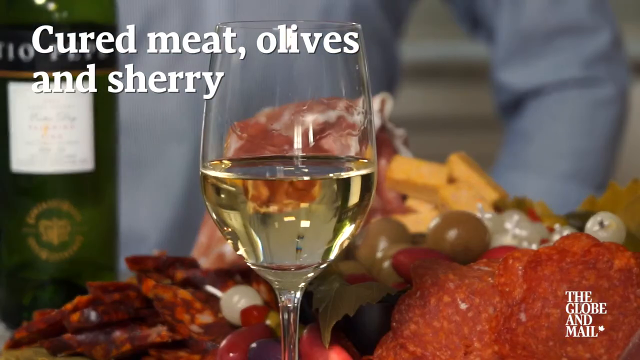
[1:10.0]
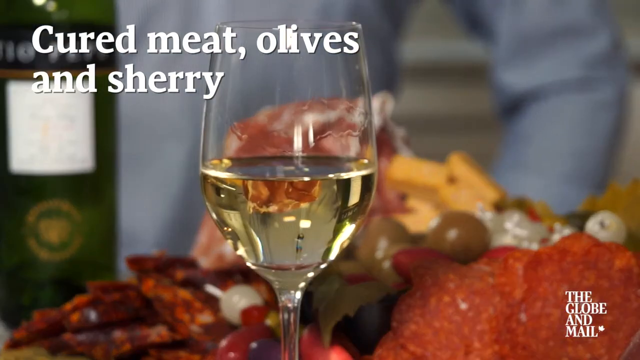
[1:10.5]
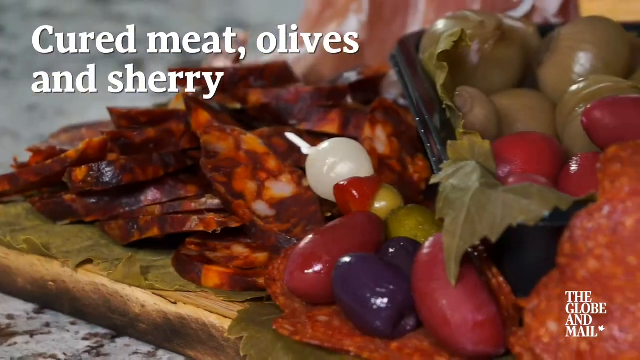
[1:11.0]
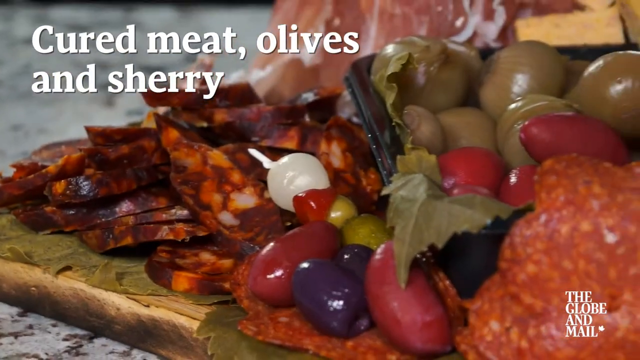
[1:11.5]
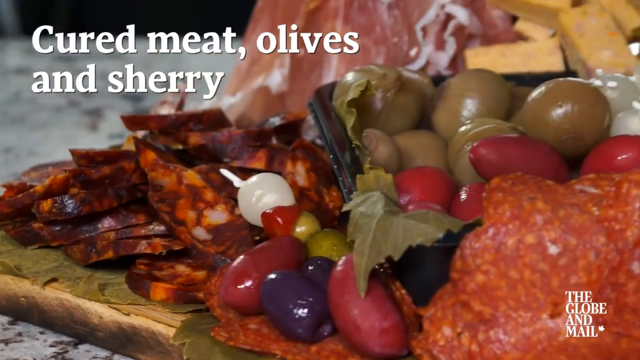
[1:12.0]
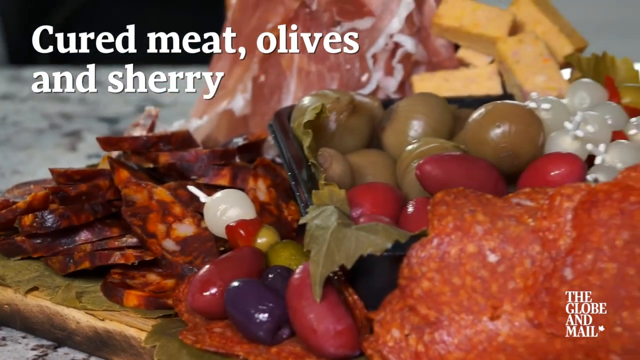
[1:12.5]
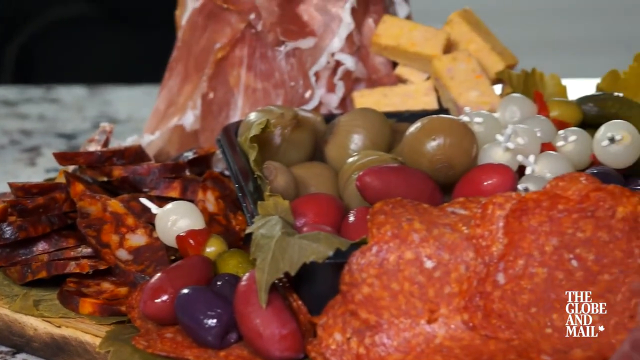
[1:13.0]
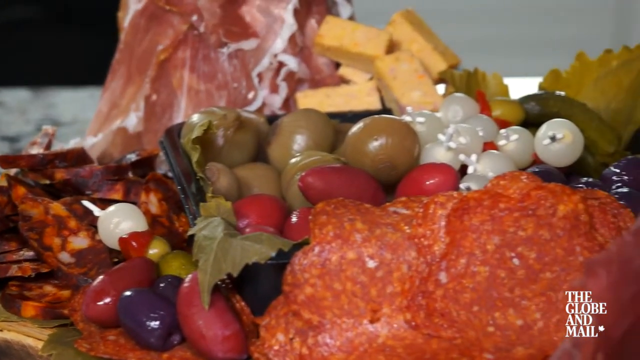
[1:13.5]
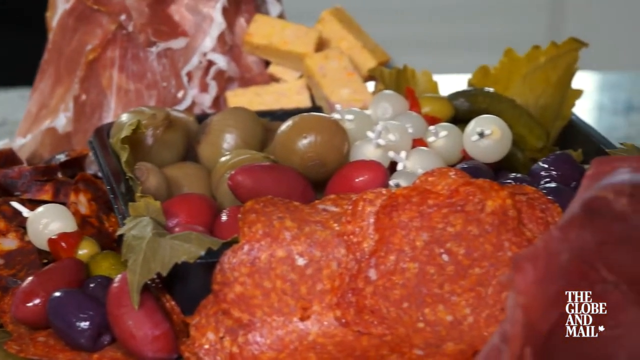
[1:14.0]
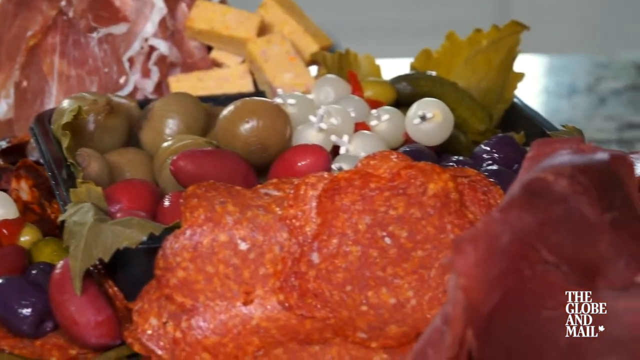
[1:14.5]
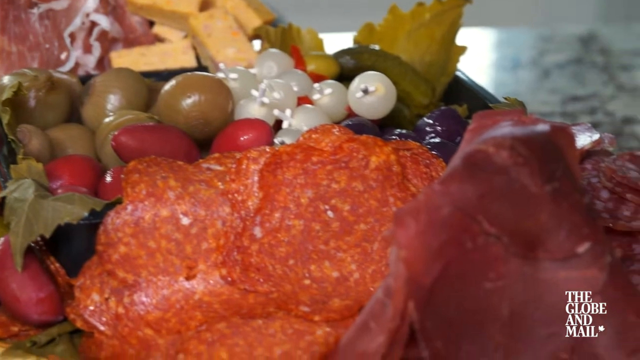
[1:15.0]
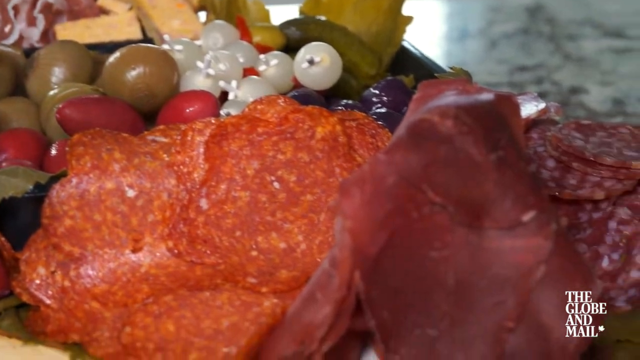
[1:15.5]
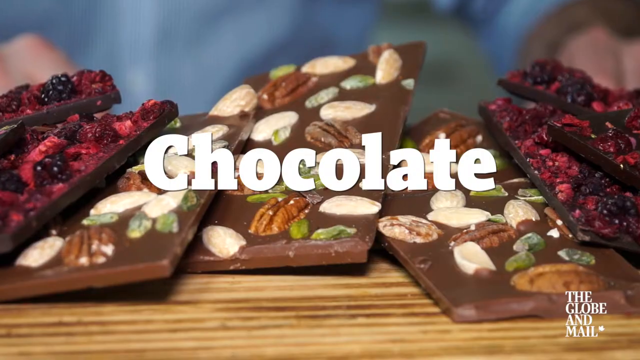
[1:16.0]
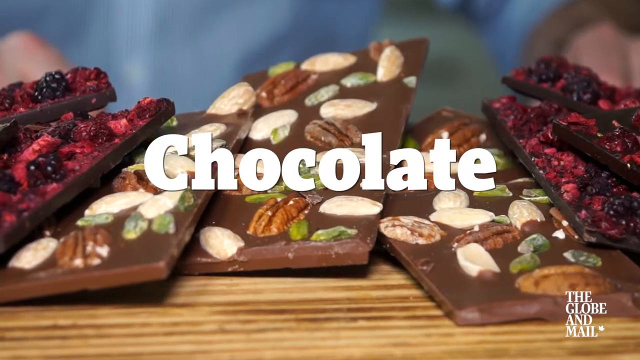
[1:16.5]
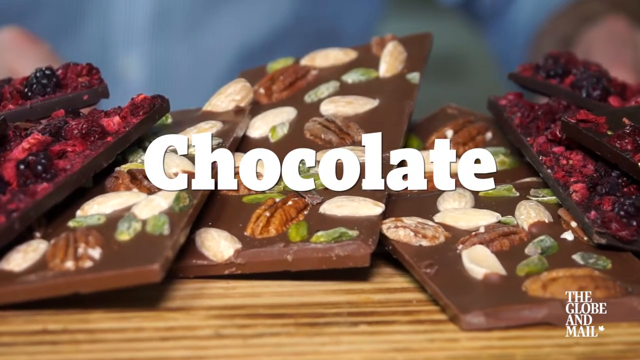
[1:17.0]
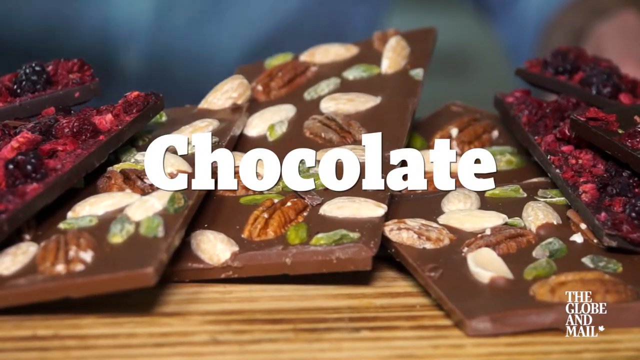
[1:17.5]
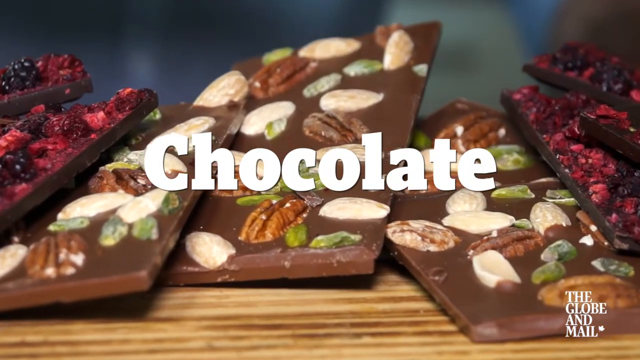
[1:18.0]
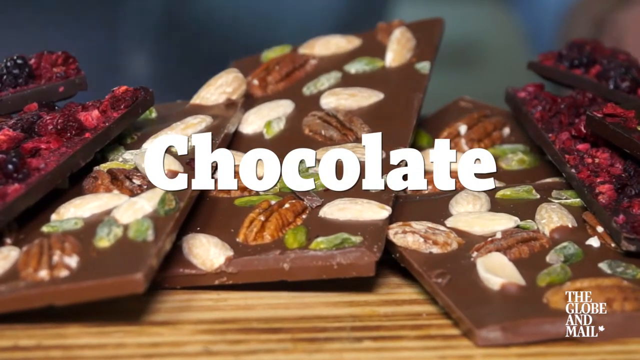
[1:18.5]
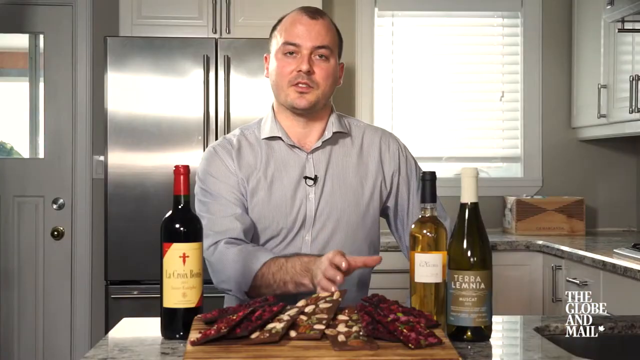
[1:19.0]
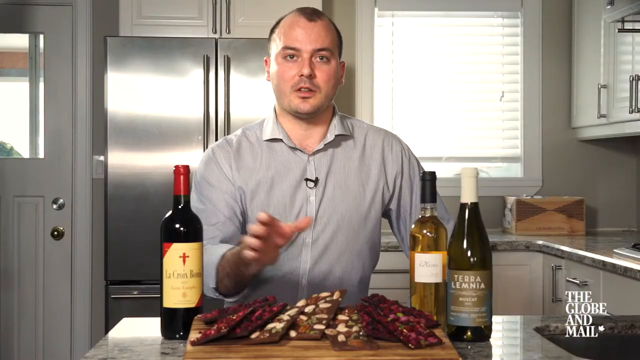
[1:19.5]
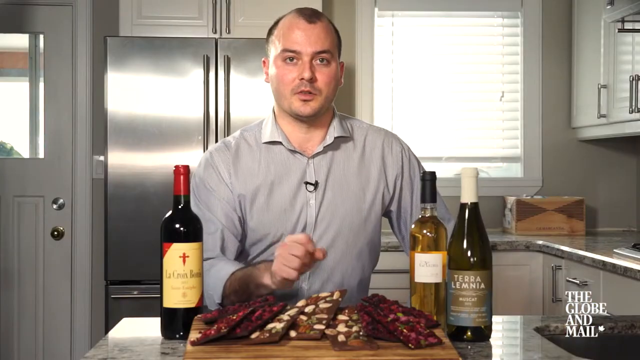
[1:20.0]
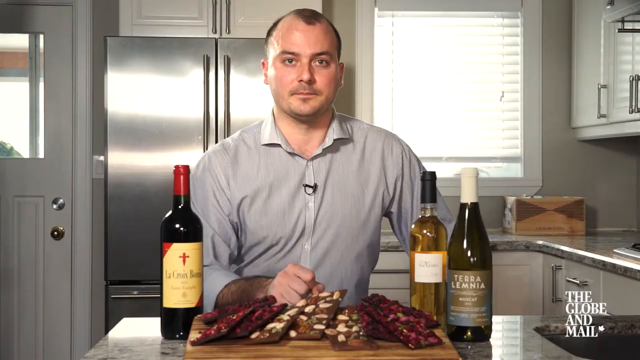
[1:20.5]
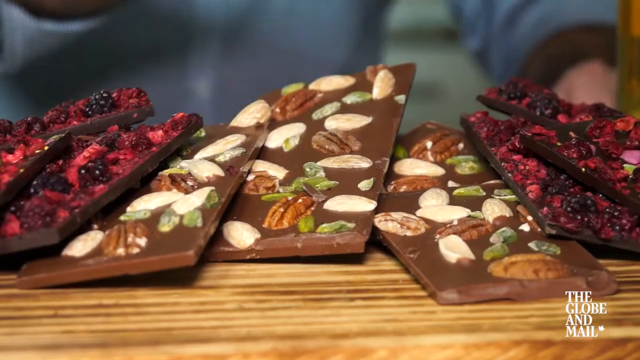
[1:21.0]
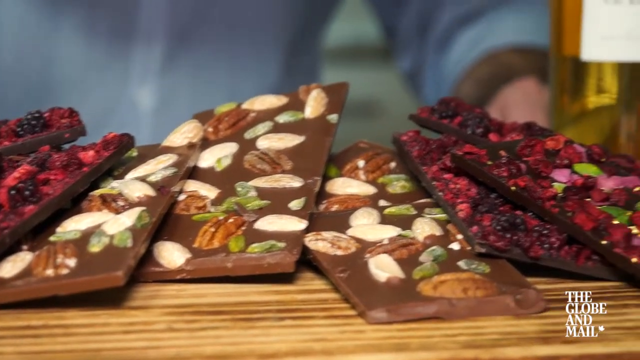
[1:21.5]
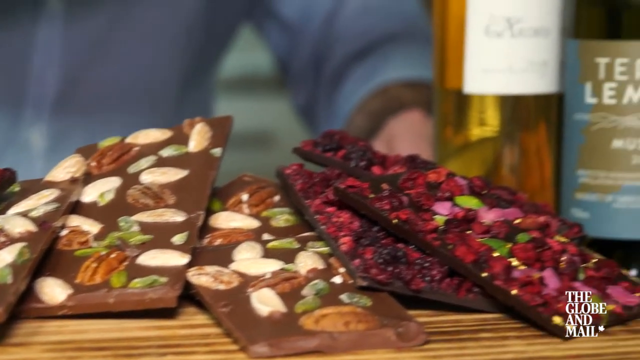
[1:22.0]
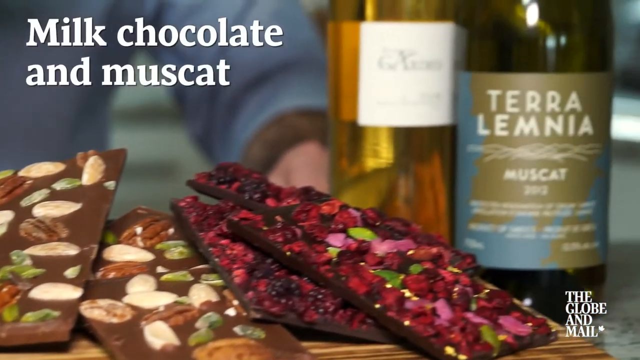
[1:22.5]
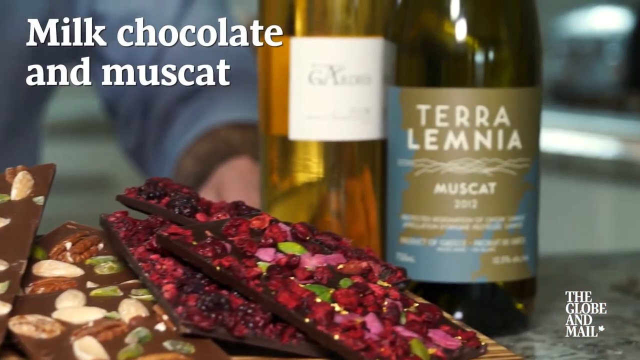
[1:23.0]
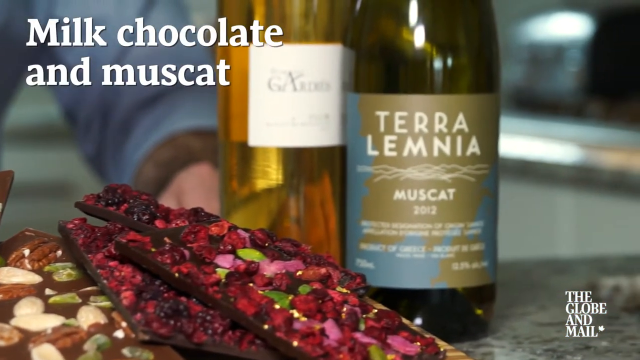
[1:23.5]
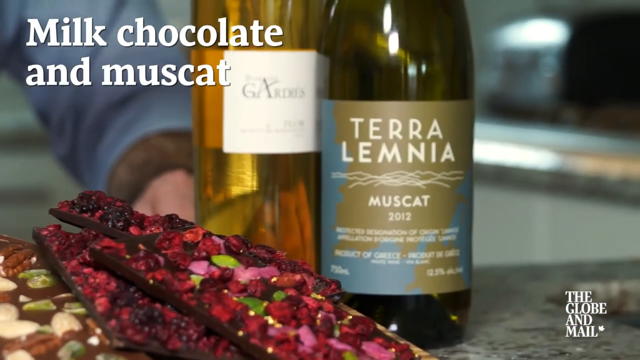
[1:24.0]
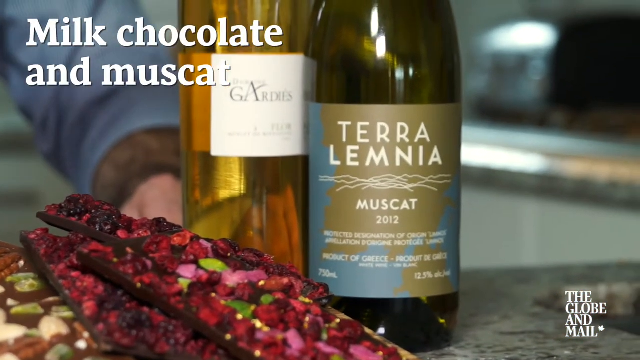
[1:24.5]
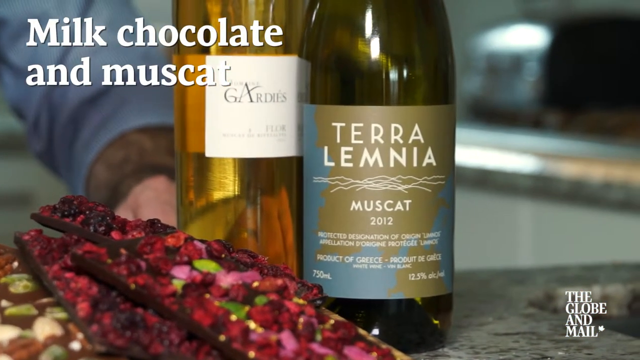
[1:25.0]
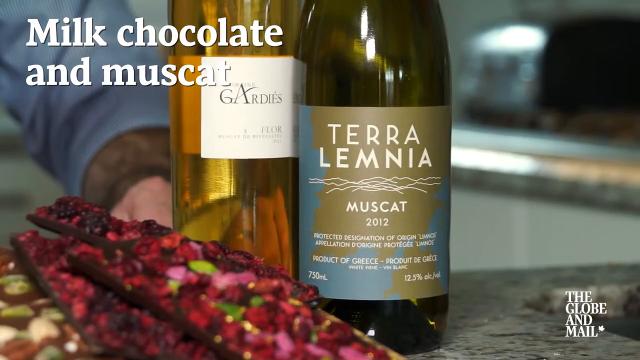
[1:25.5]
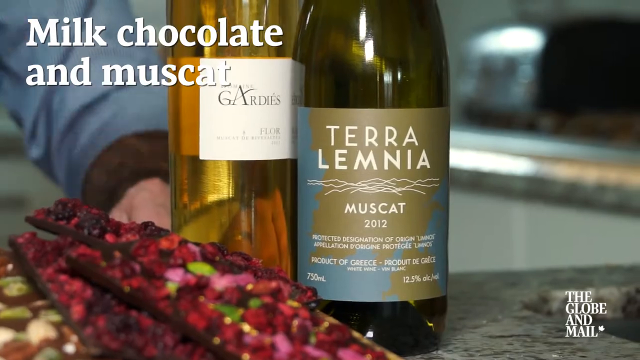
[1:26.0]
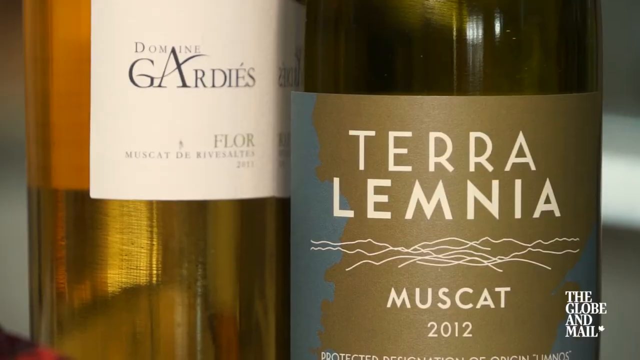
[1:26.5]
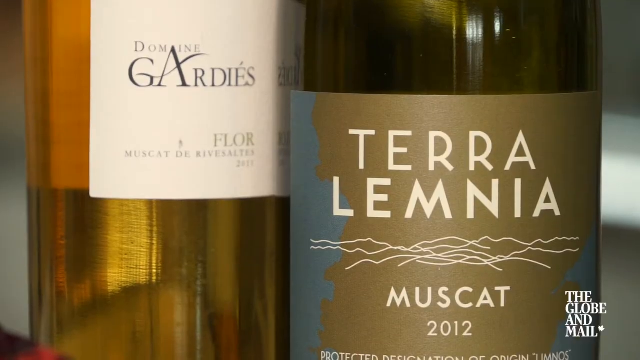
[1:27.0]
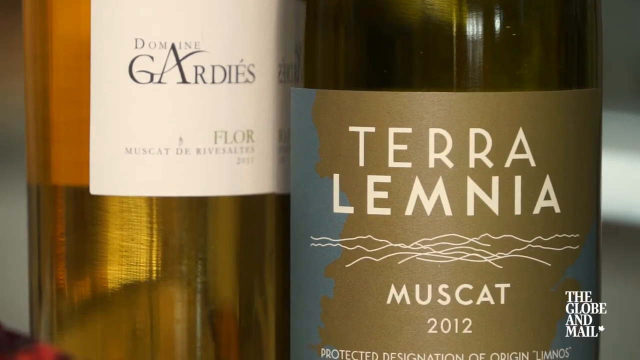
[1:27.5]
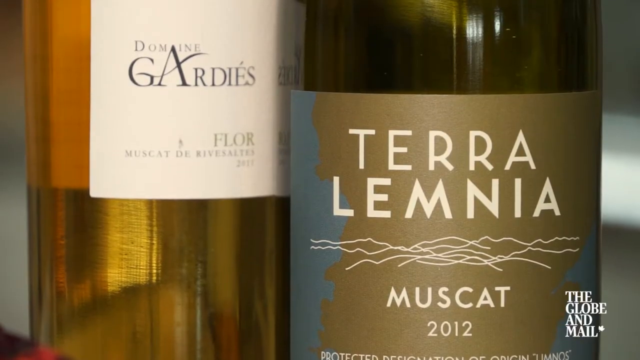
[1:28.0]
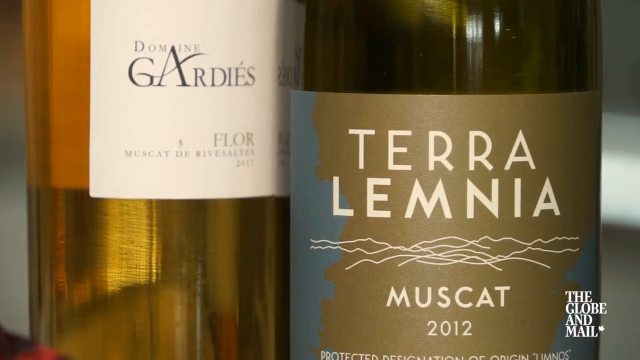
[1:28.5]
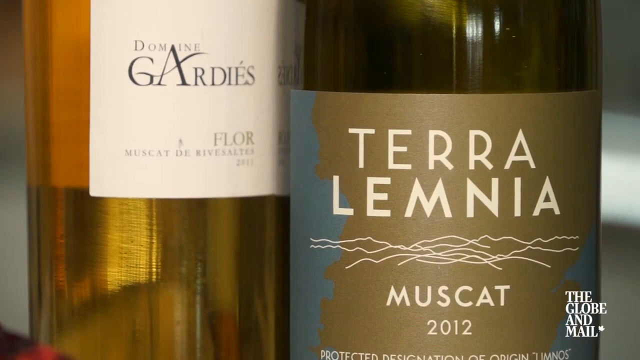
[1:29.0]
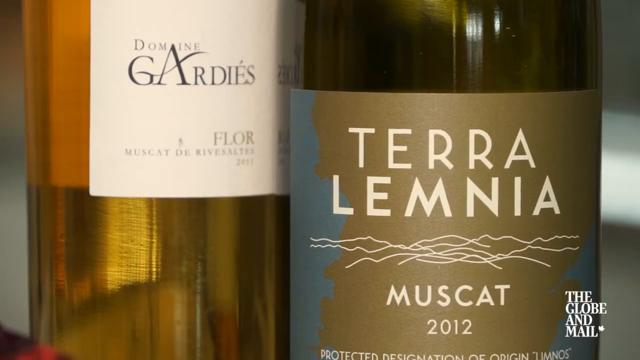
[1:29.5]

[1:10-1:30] Wine is poured from the bottle into a wine glass, revealing it to be white wine, and text at the top left of the screen reads "cured meat, olives and sherry." The video zooms out over various food items on a charcuterie board: olives, thinly sliced meats, leafy greens and cheese. Then "chocolate" appears in bold white text on the screen, and dark chocolate and strawberry chocolates are on the charcuterie board. Three bottles of wine are on the table. One has a white cover and is named Terra Lemnia, a Muscat 2012 with 12% alcohol volume, 750 ml. Next to it is another wine called Domain Gardis, also a Muscat.